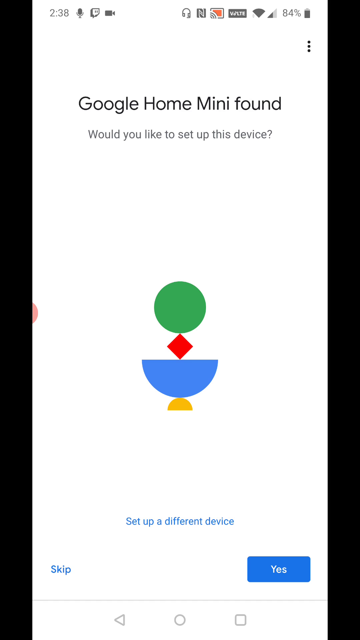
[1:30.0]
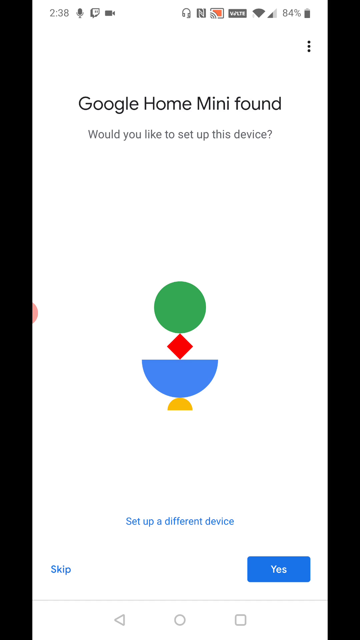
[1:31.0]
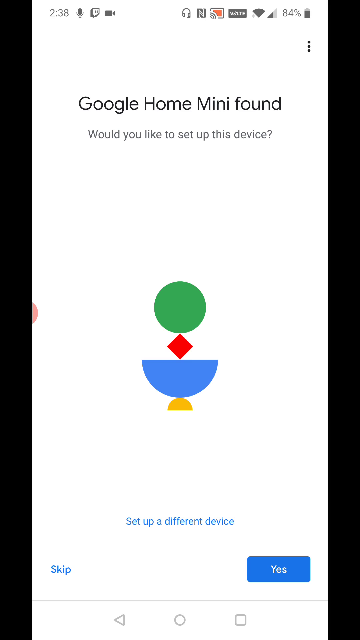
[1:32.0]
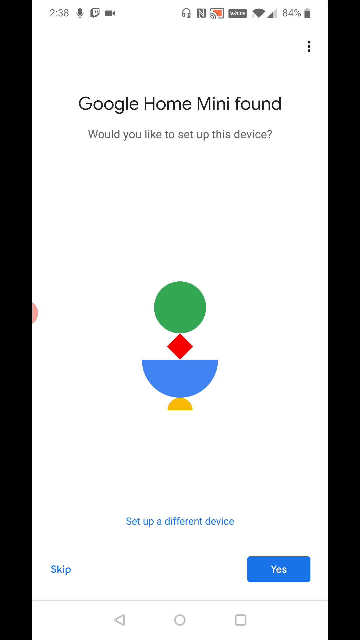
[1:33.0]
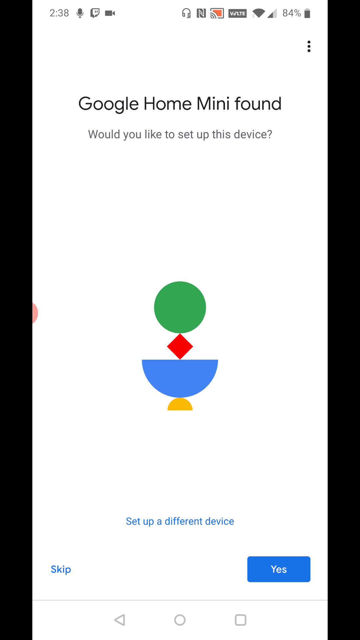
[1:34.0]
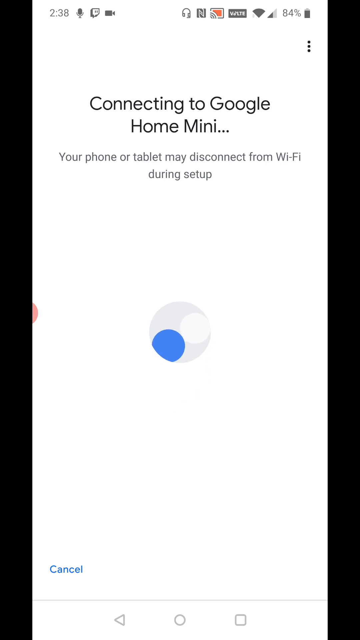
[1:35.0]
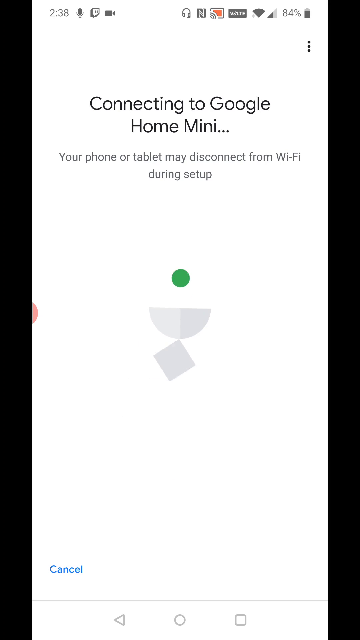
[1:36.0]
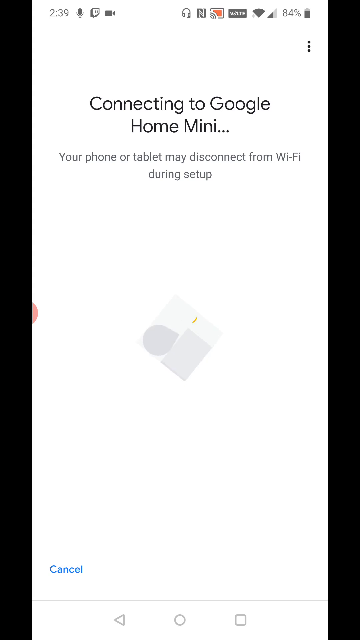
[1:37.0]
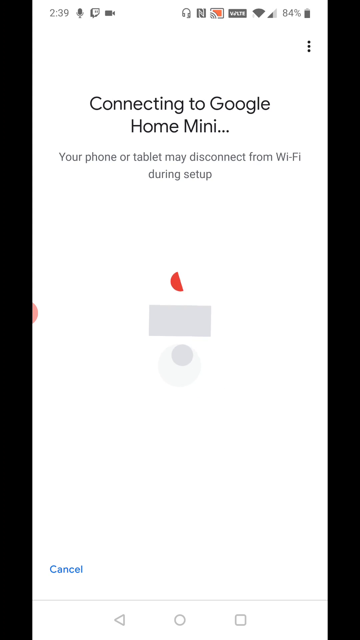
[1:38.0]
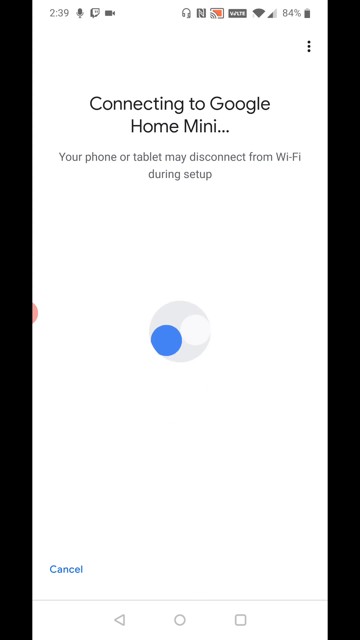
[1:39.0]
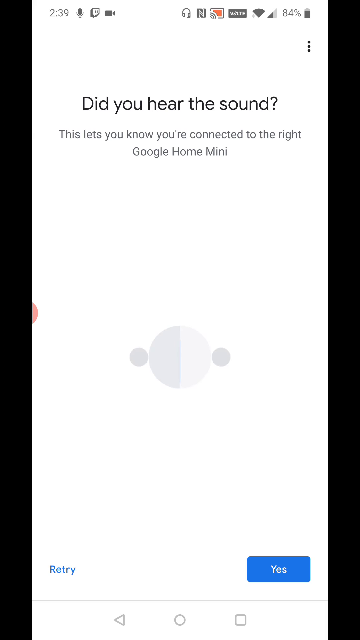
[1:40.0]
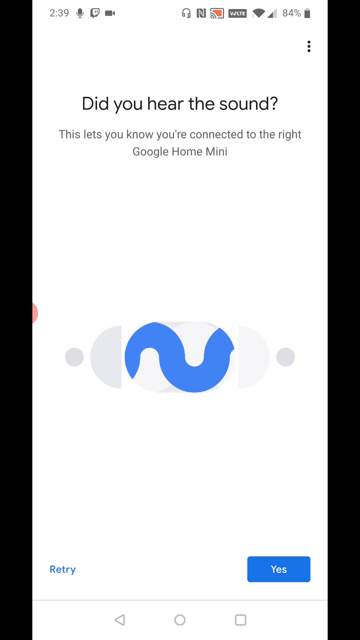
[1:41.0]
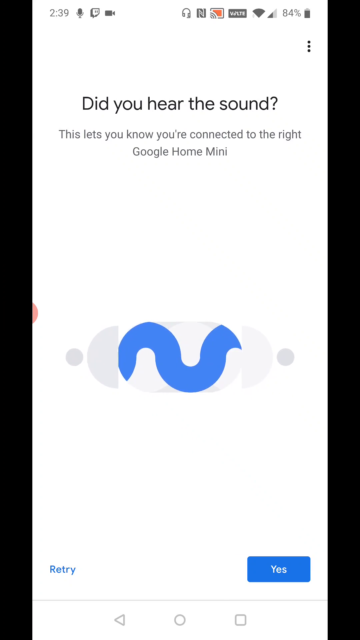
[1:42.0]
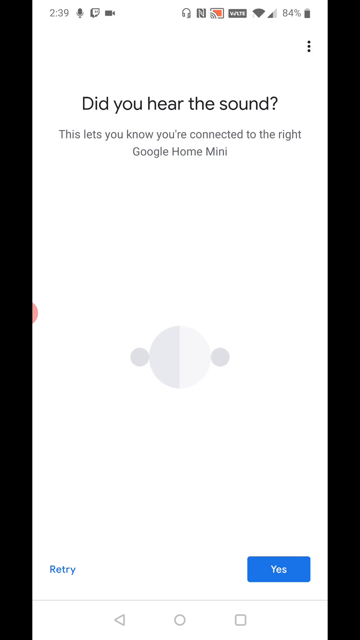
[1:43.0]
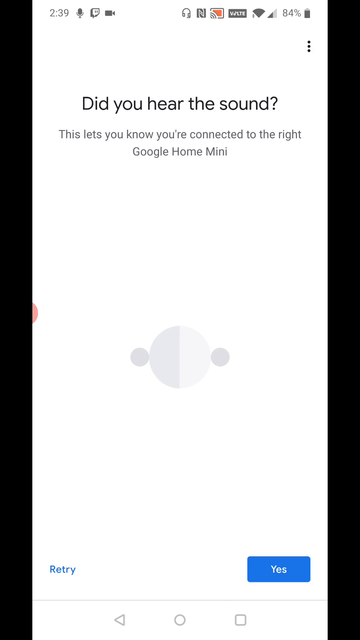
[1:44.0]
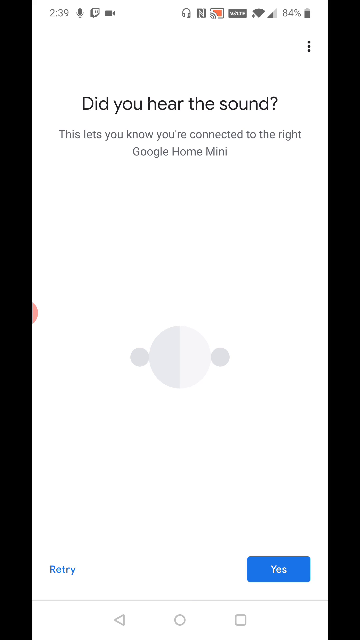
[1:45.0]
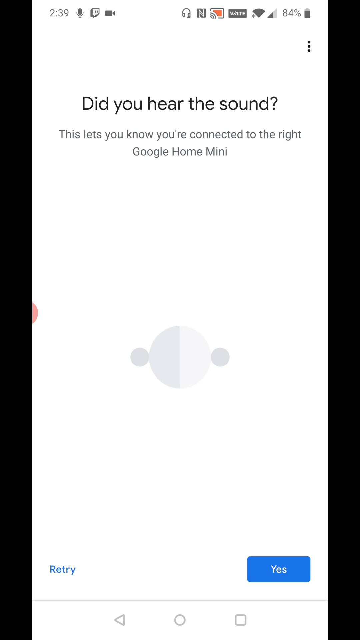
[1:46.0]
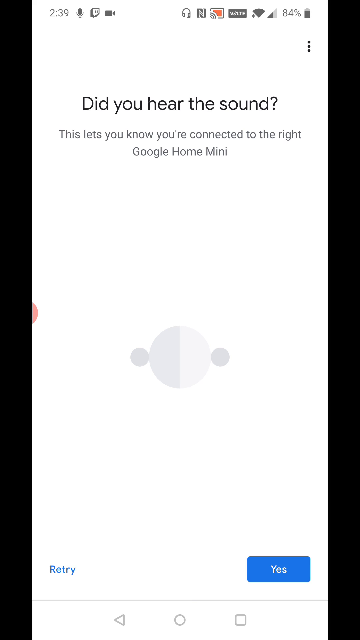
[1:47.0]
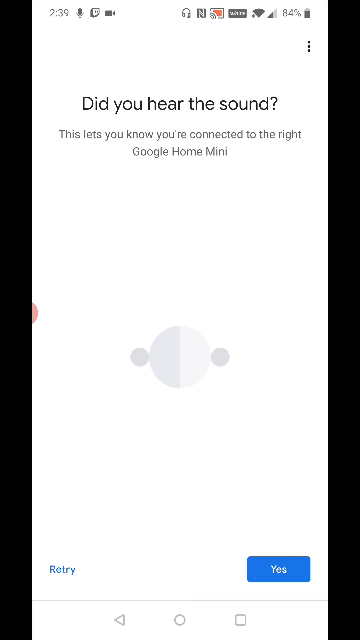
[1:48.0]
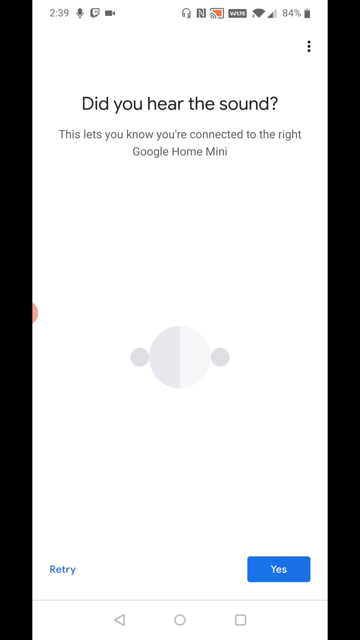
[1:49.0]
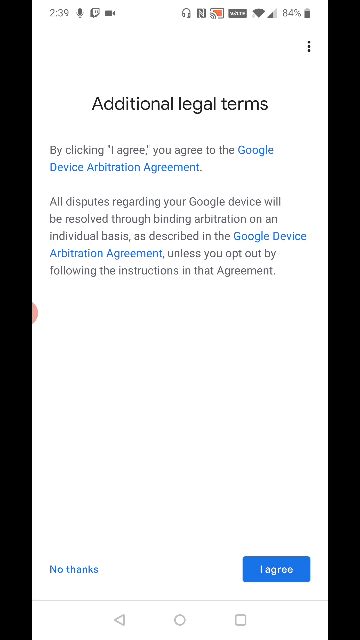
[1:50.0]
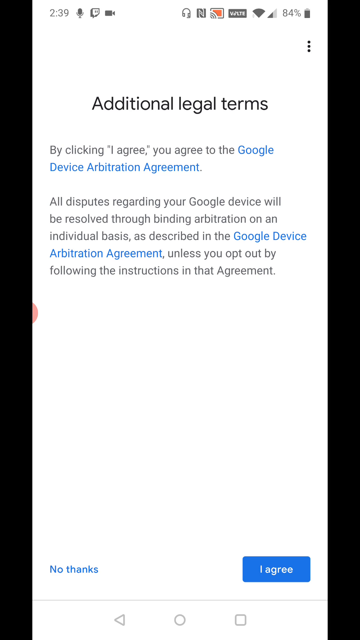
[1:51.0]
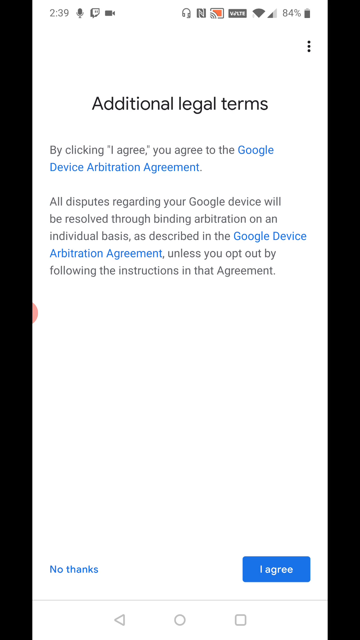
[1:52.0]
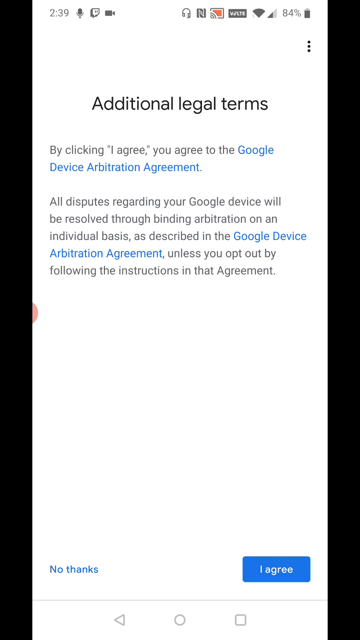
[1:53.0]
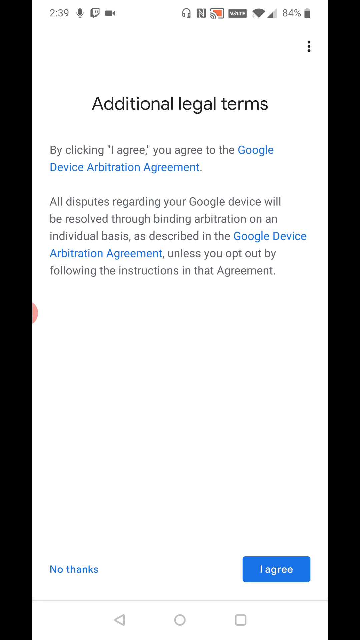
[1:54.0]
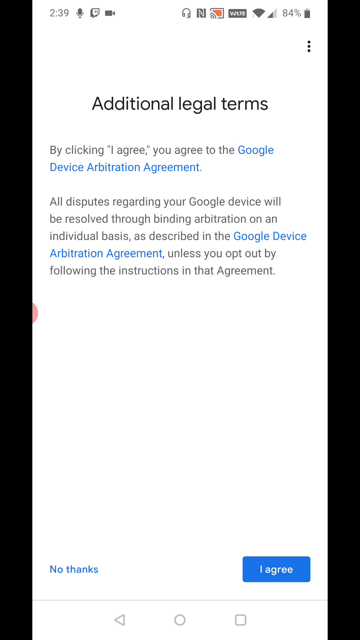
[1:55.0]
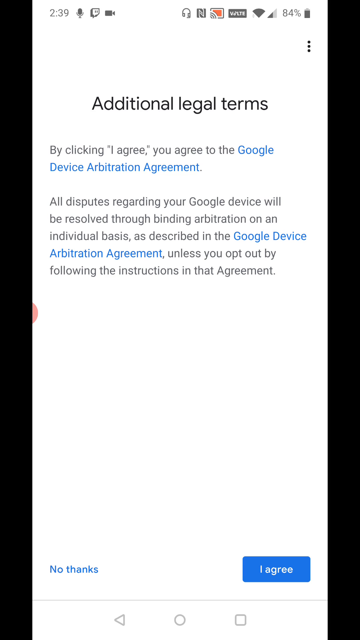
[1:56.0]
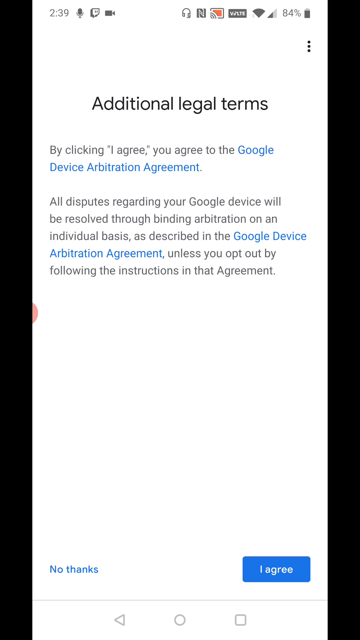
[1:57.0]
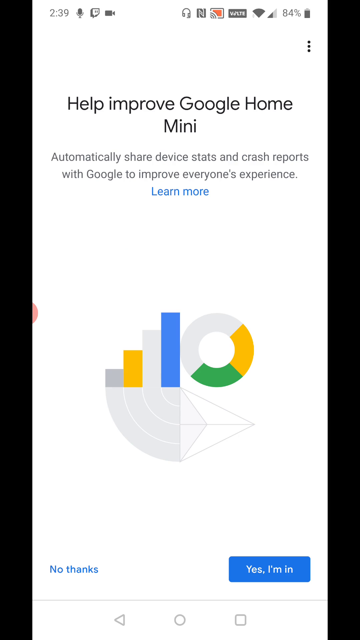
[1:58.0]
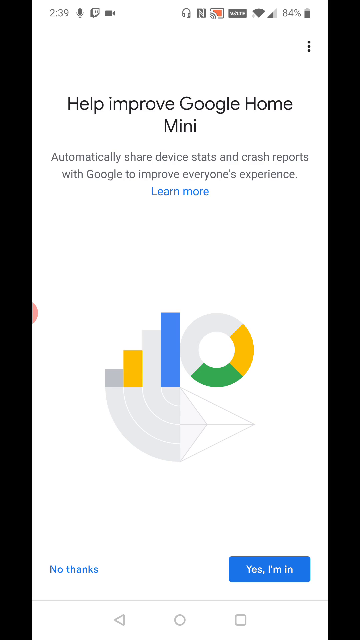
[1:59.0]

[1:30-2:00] The phone screen reads "Google Home Mini found" and "Would you like to set up this device?" The phone shows 2:38 and 84 percent battery. It then says "Connecting to Google Home Mini" and "Your phone or tablet may disconnect from Wi-Fi during setup," with a loading screen while it connects. Next it says "Connected" and "Do you hear the sound? This lets you know you're connected to the right Google Home Mini." A screen of additional legal terms follows: "By clicking I agree you agree to the Google device arbitration agreement. All disputes regarding your Google device will be resolved through binding arbitration on an individual basis as described in the Google device arbitration agreement." Then a screen says something like "help improve Home Mini".